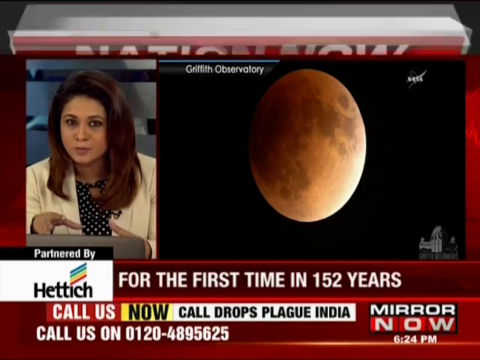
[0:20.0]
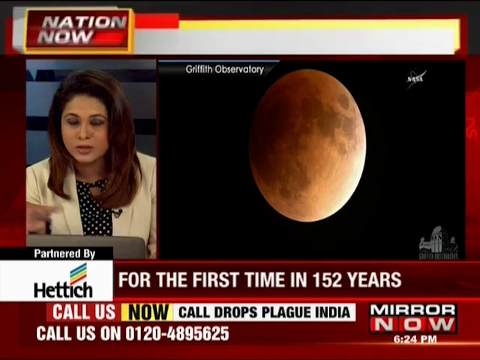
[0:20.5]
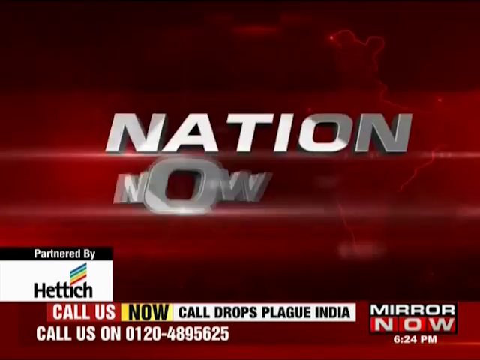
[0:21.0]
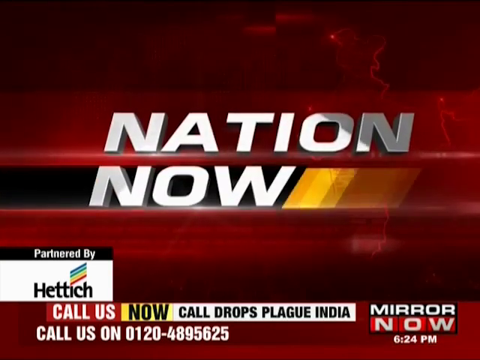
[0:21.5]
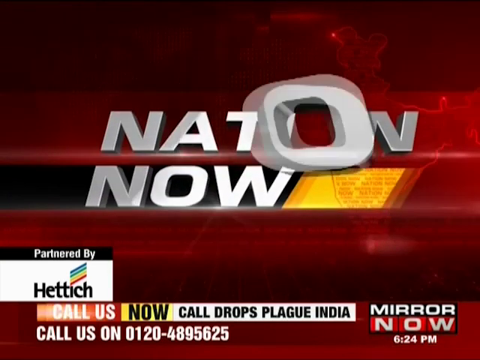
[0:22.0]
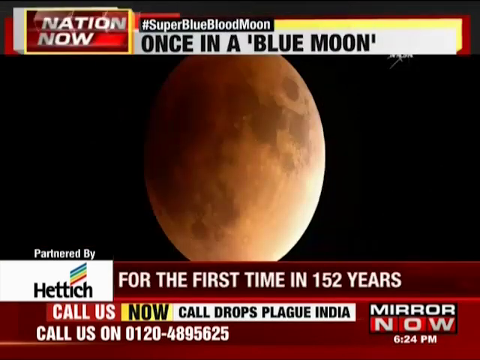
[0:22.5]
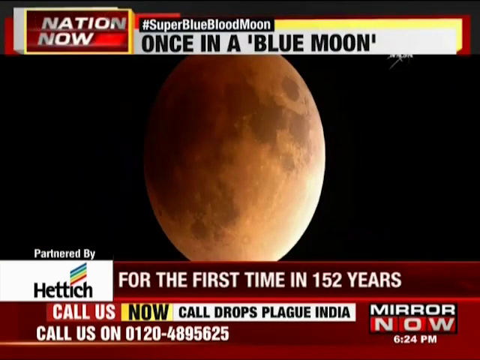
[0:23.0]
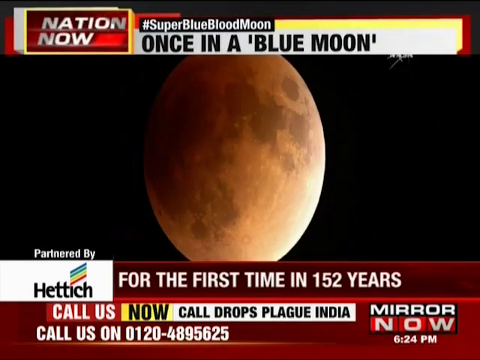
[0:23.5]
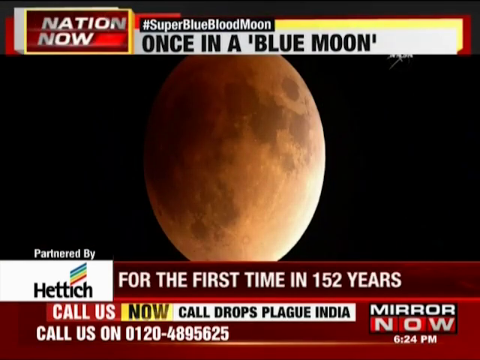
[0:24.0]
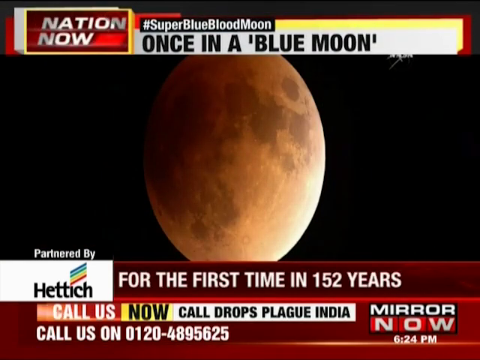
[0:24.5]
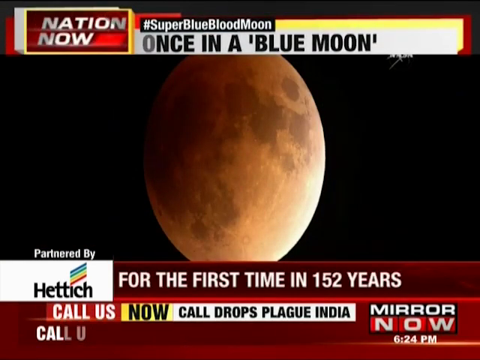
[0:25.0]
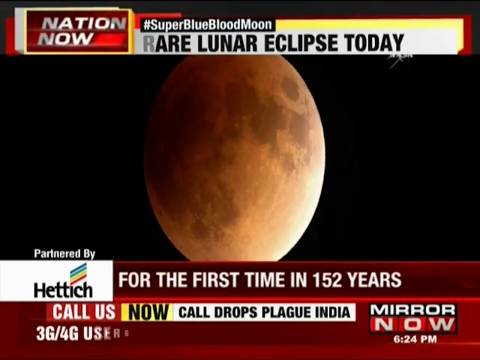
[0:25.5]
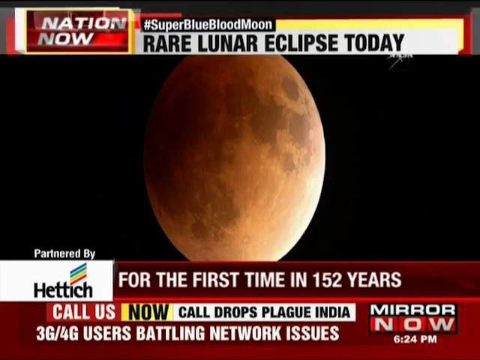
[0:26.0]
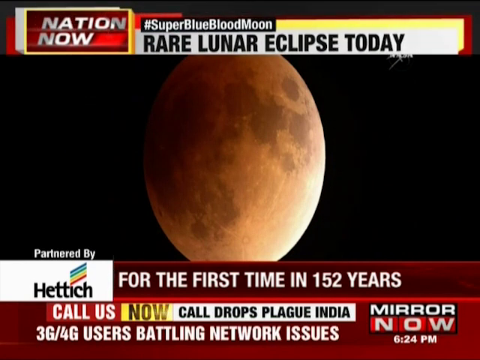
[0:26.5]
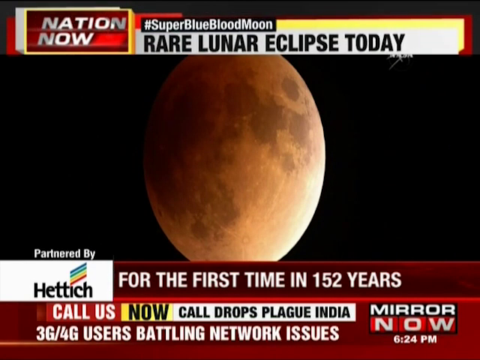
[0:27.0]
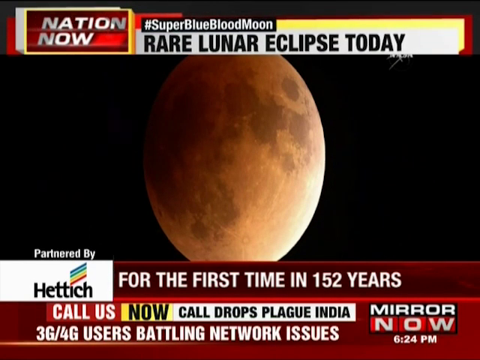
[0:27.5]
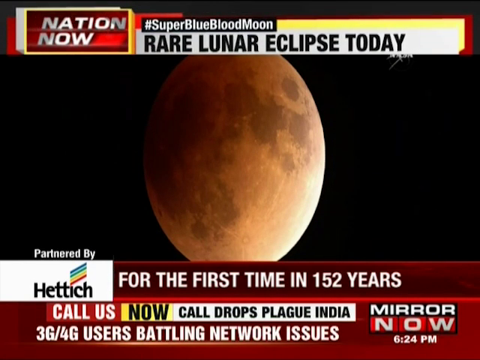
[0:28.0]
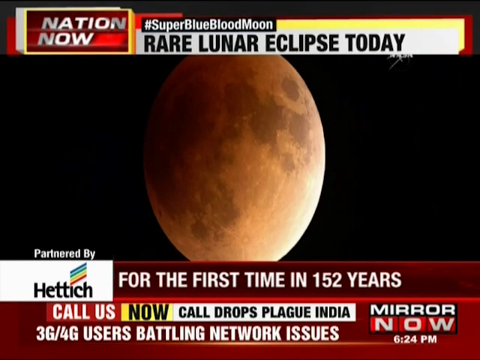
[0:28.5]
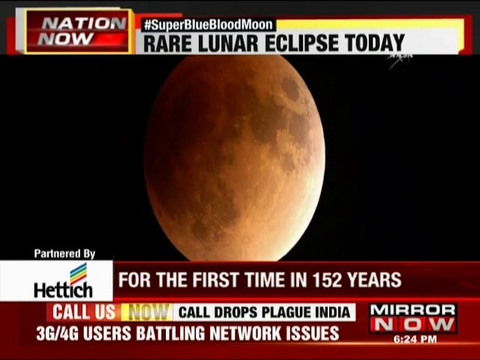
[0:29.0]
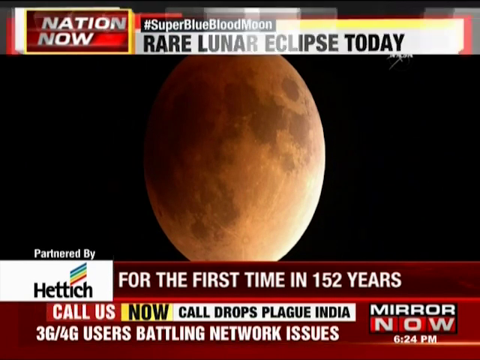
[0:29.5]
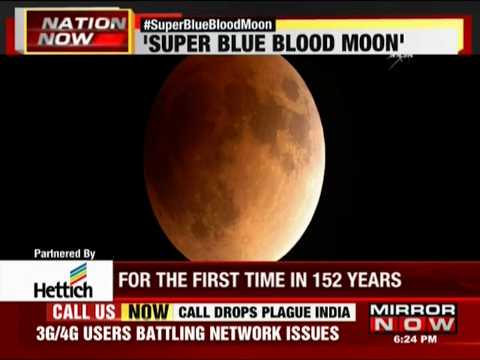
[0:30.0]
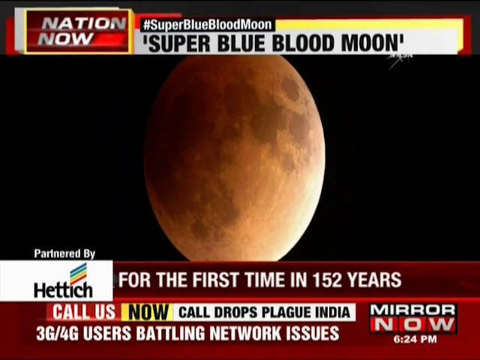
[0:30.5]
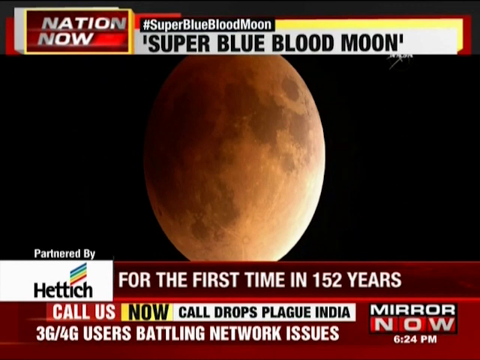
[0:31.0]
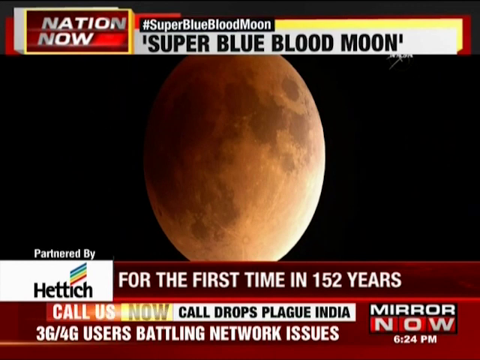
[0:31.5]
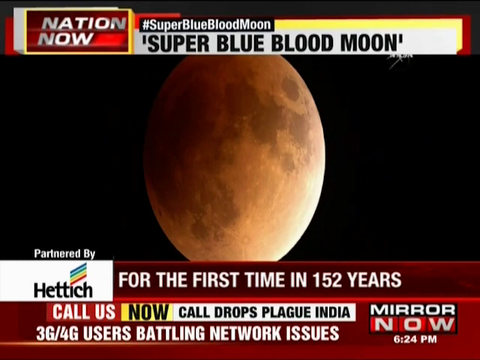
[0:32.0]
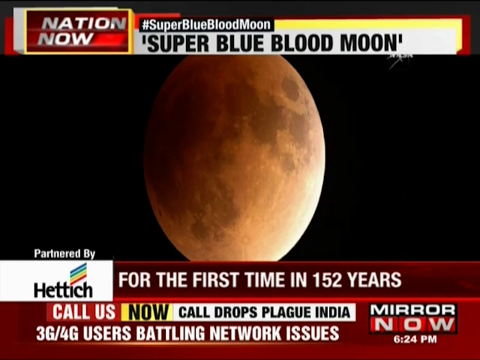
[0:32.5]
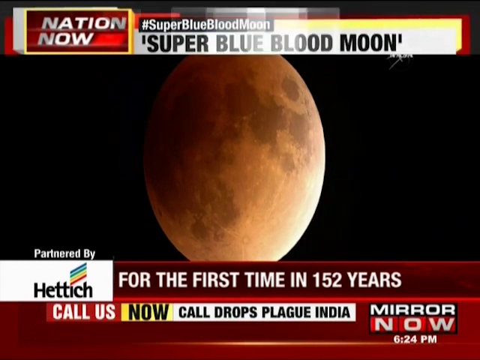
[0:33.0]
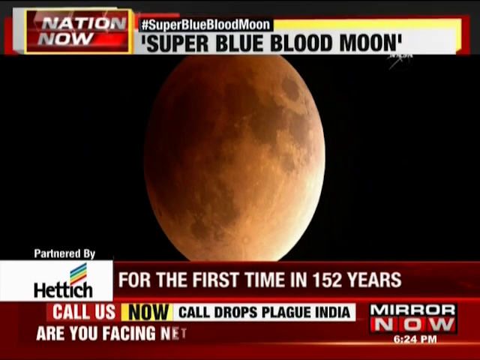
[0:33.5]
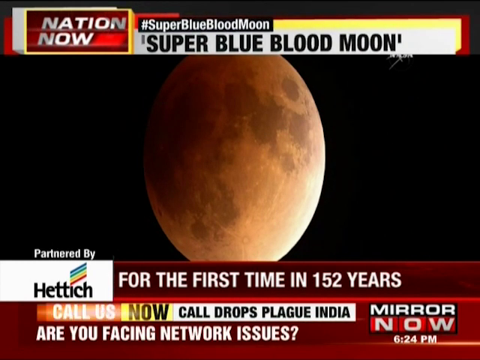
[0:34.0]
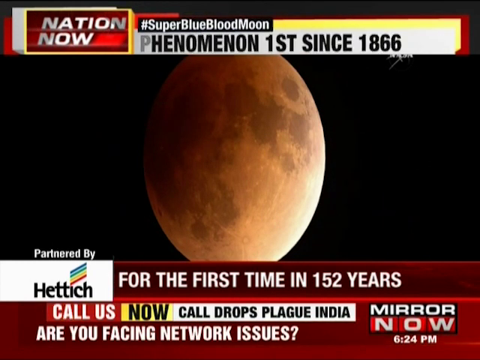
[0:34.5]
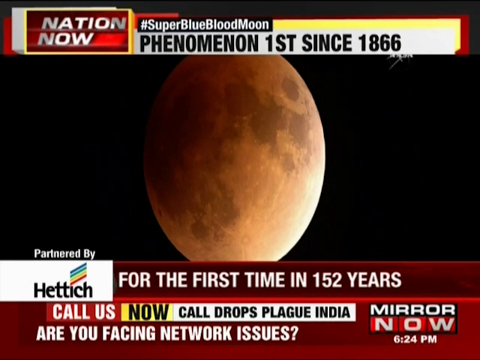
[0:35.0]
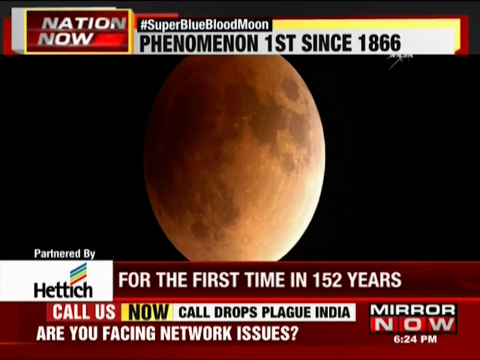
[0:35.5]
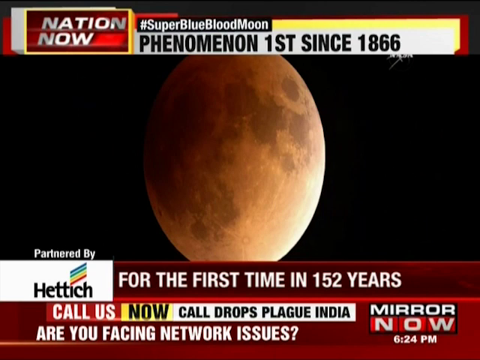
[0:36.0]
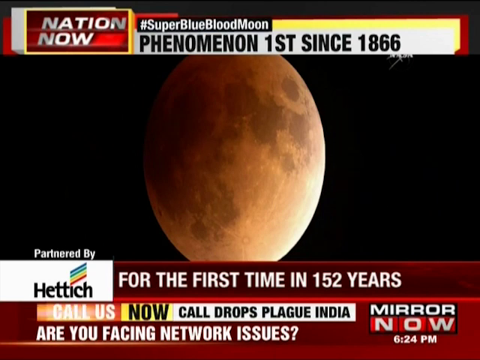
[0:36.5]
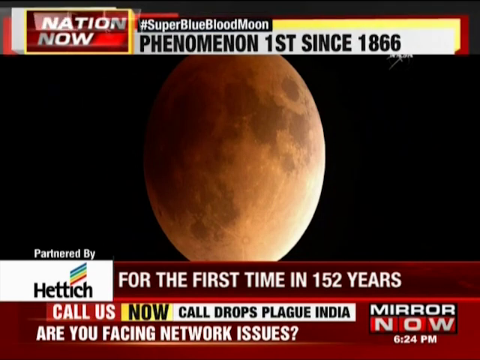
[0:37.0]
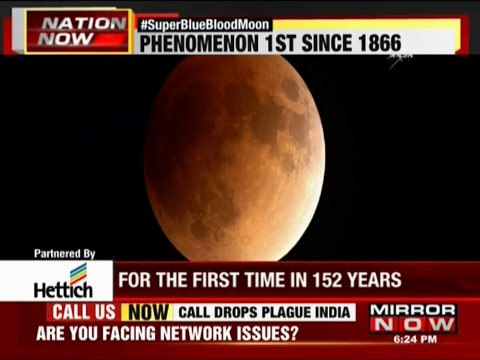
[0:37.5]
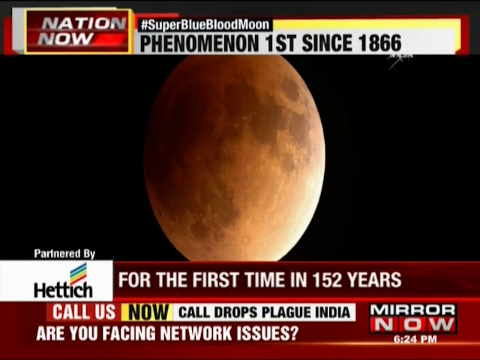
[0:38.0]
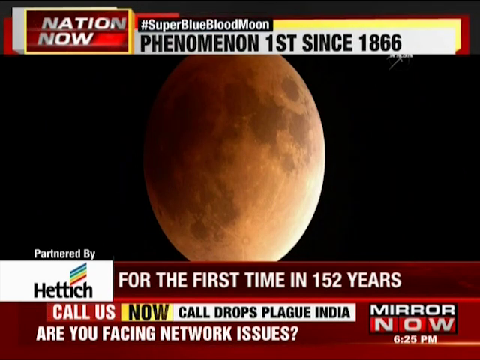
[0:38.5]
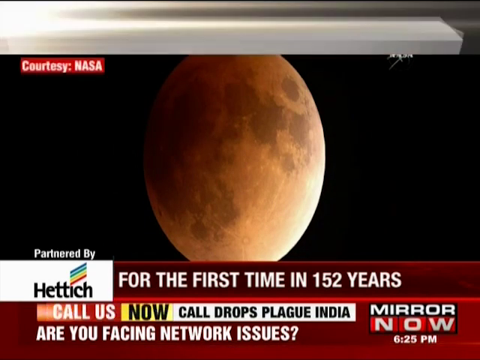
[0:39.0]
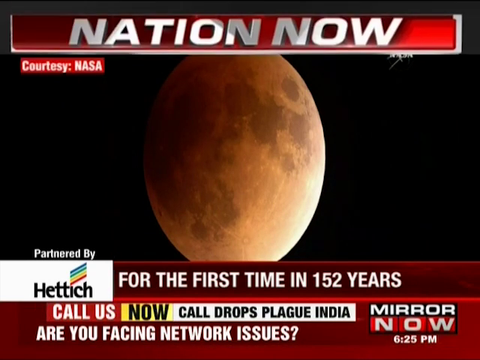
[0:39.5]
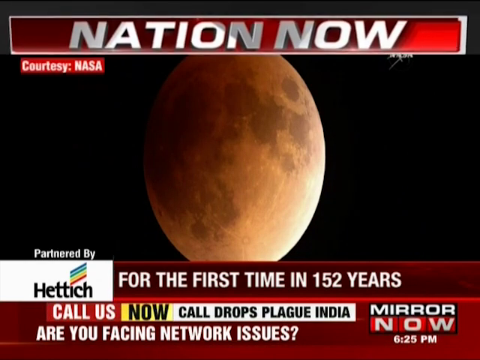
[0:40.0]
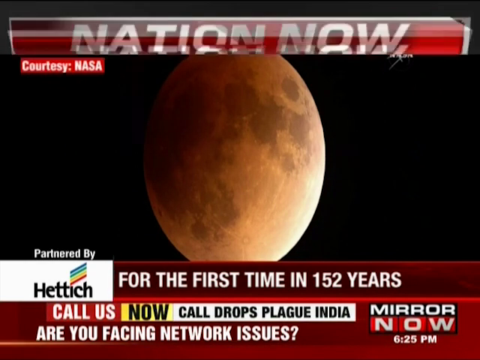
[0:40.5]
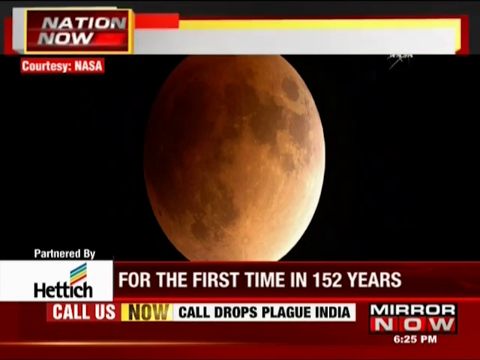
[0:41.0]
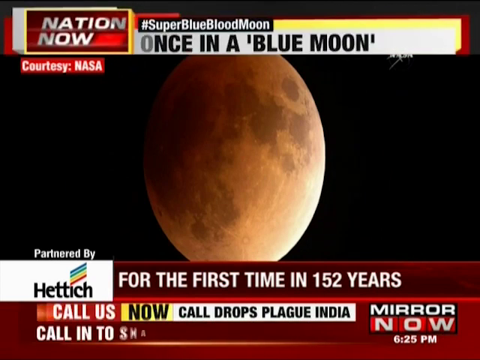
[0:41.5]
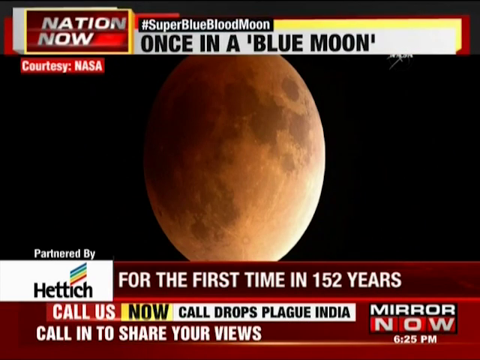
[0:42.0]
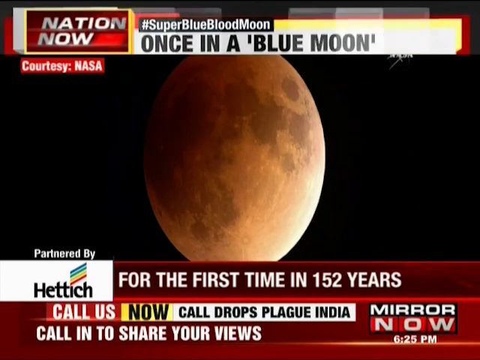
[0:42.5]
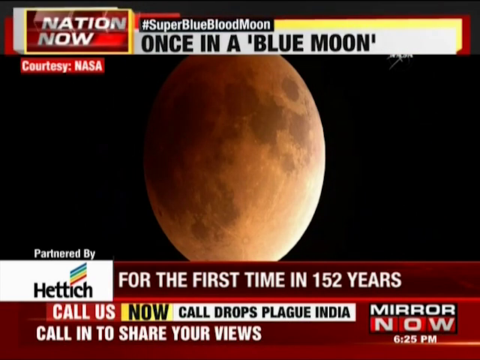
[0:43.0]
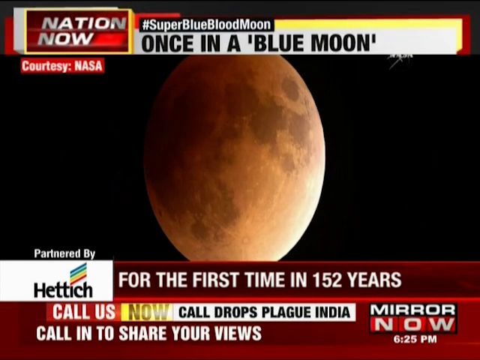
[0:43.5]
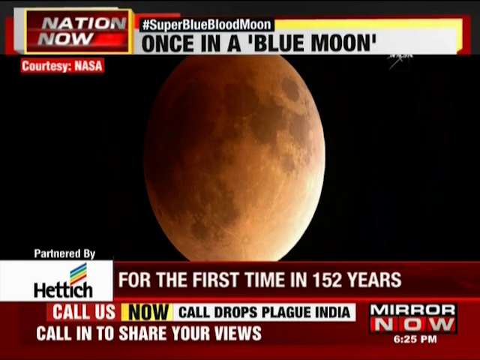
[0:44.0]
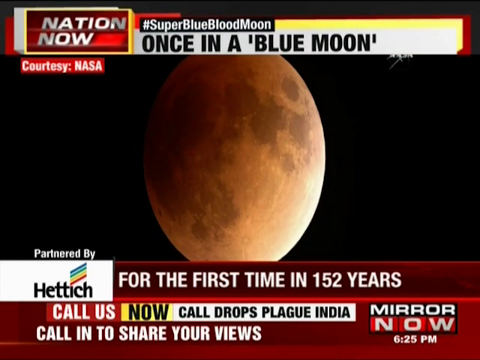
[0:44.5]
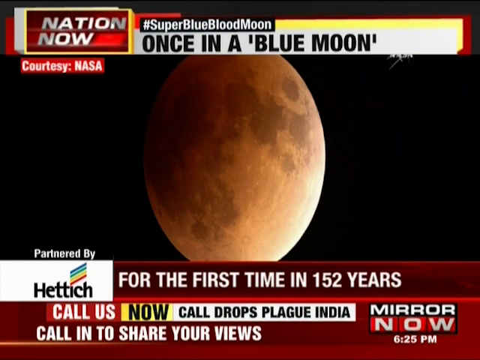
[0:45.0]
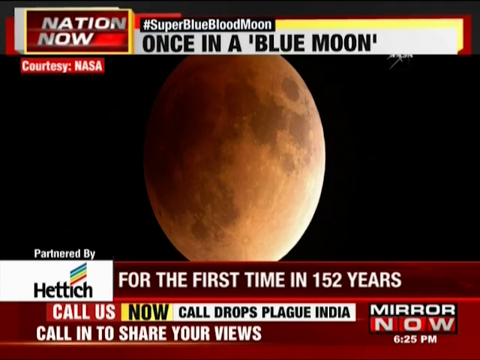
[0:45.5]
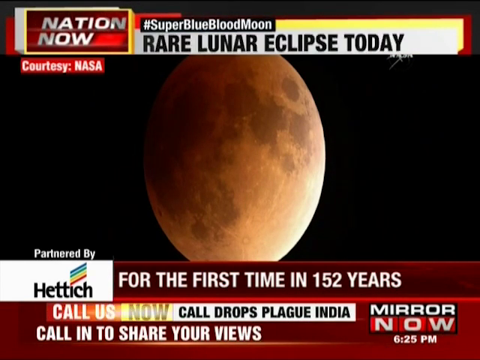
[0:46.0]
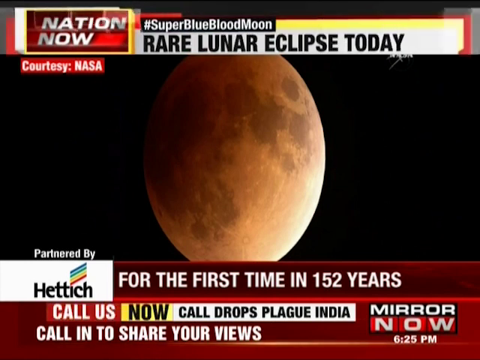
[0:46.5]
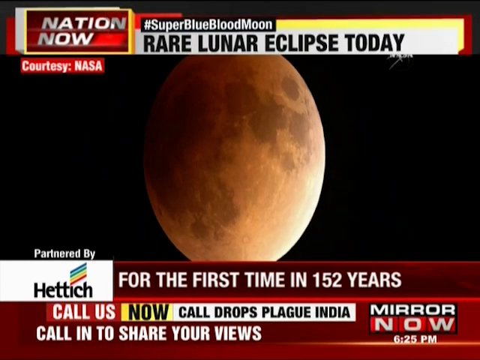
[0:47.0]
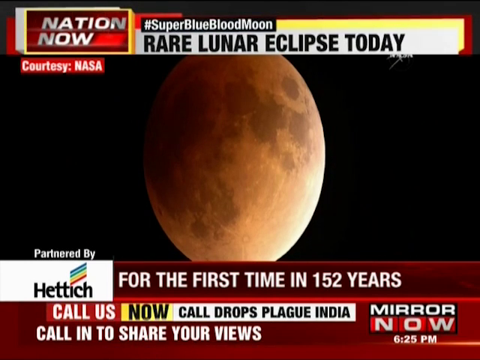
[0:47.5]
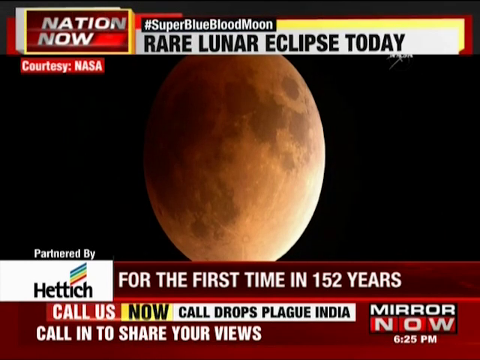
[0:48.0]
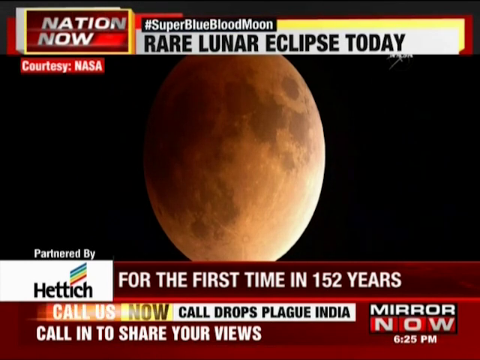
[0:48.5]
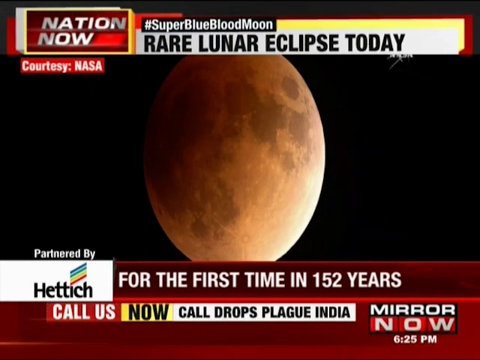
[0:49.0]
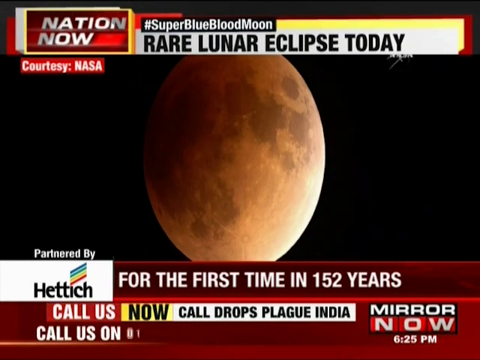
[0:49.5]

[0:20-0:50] The news coverage concerns a rare lunar eclipse today, a blue moon described as "once in a blue moon," happening for the first time in 152 years, with the phenomenon first seen in 1866.